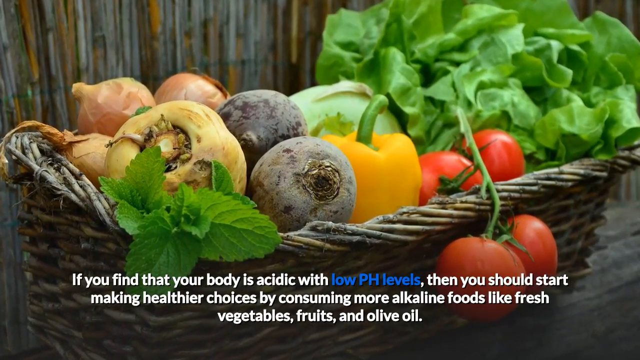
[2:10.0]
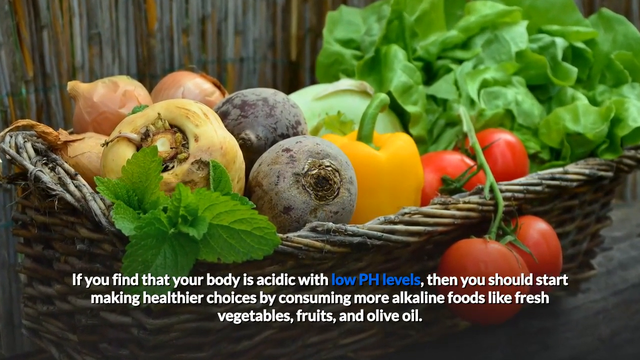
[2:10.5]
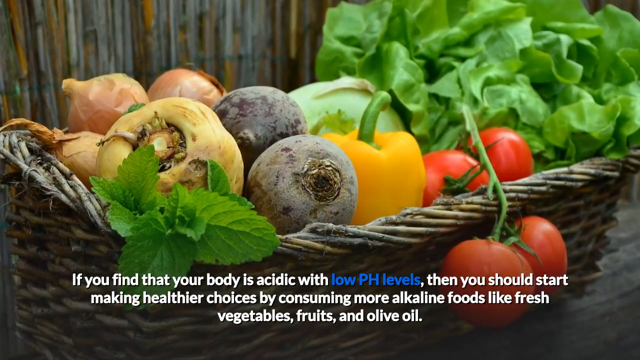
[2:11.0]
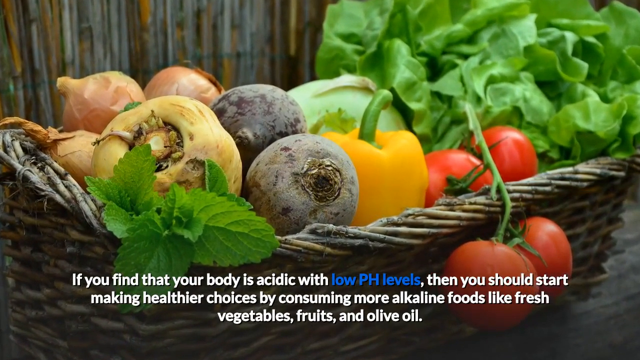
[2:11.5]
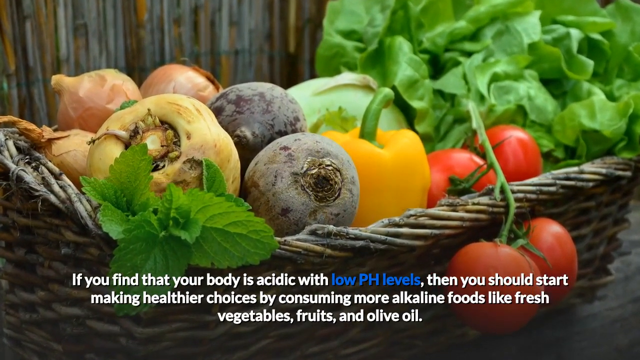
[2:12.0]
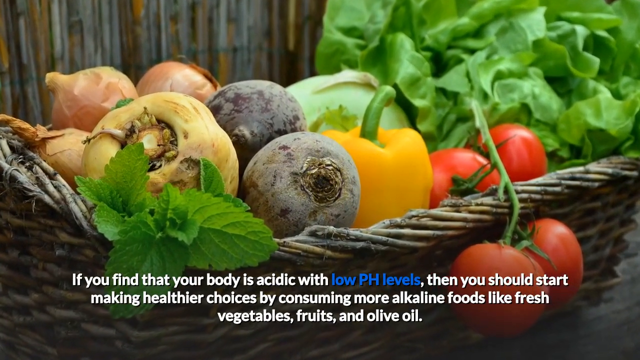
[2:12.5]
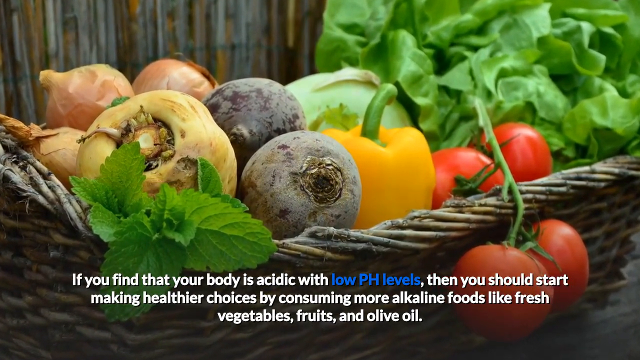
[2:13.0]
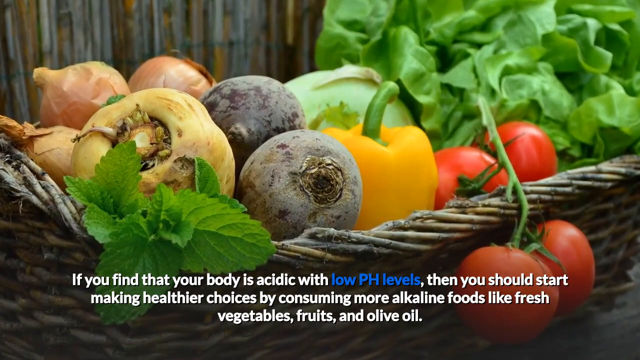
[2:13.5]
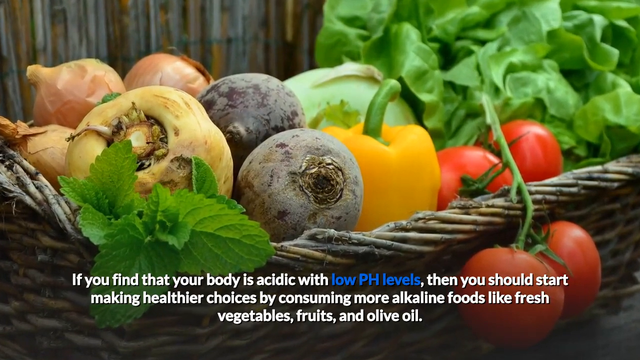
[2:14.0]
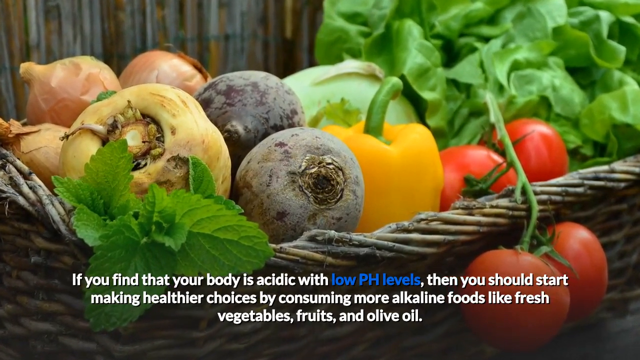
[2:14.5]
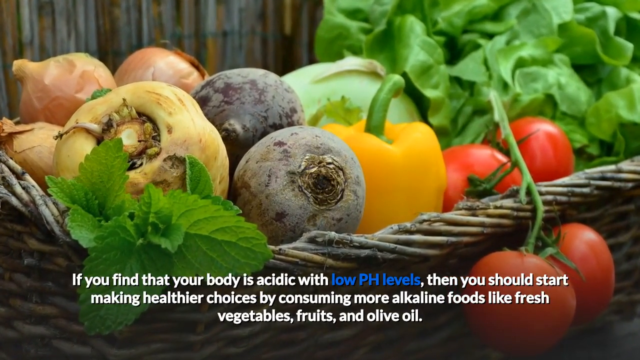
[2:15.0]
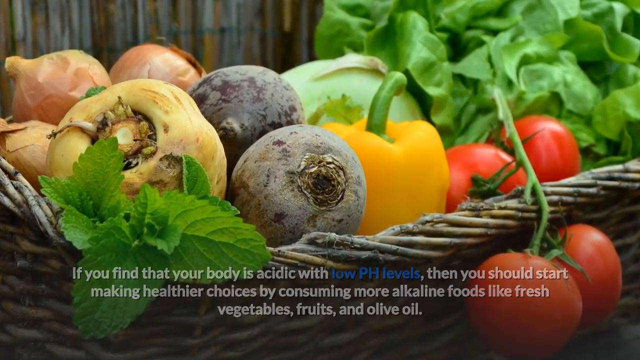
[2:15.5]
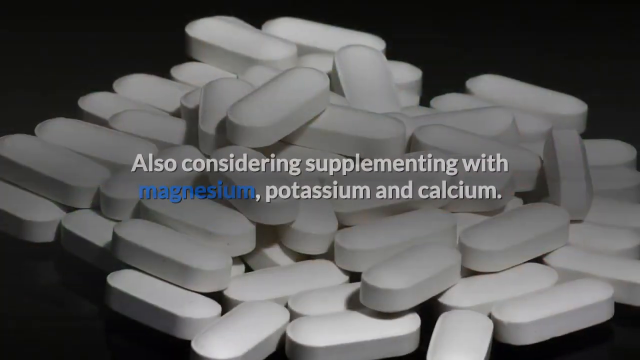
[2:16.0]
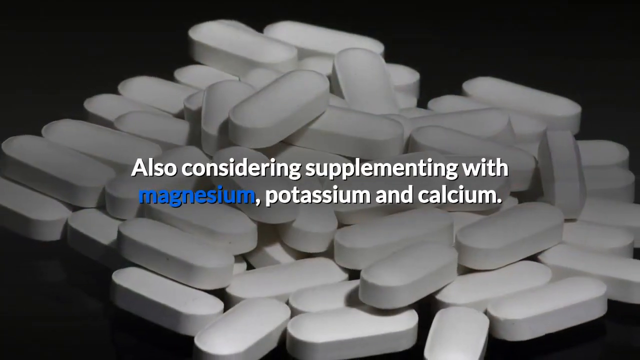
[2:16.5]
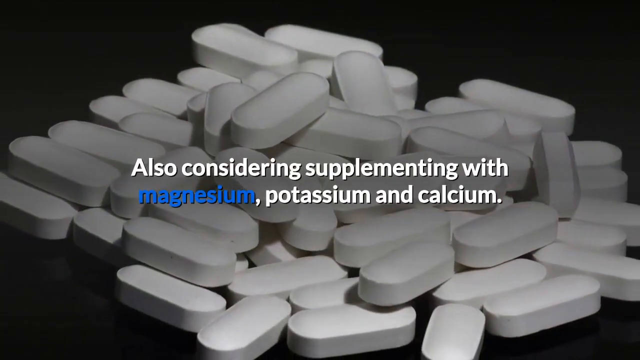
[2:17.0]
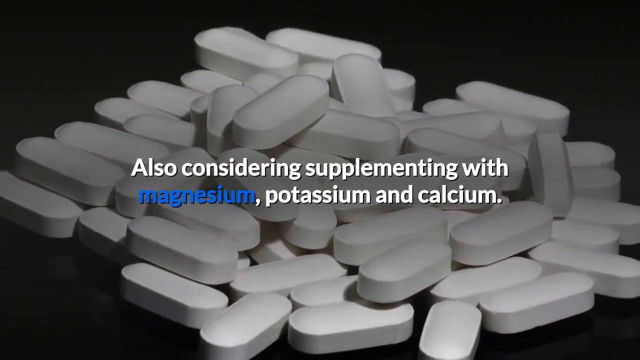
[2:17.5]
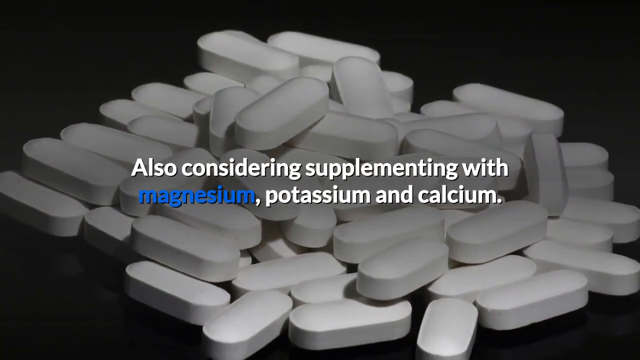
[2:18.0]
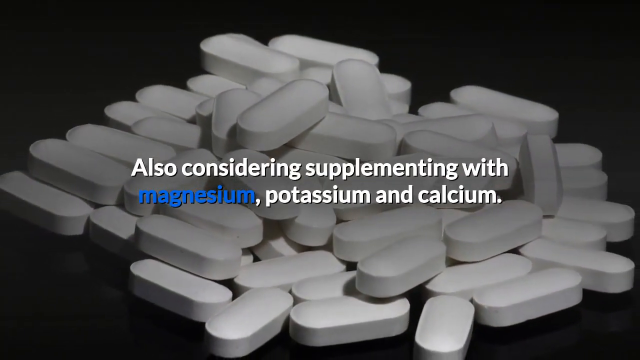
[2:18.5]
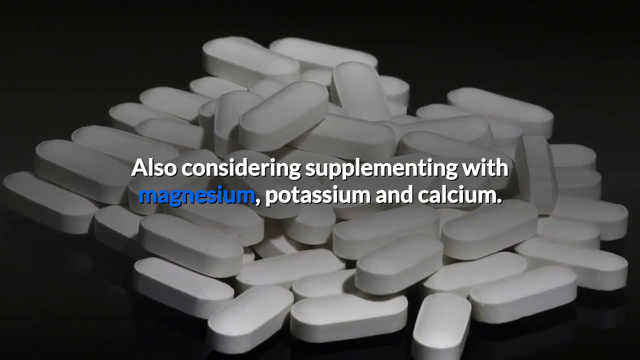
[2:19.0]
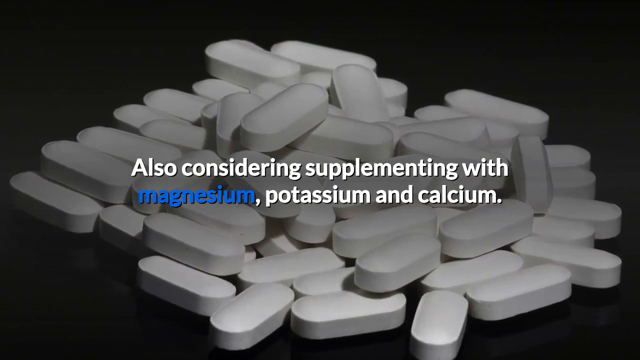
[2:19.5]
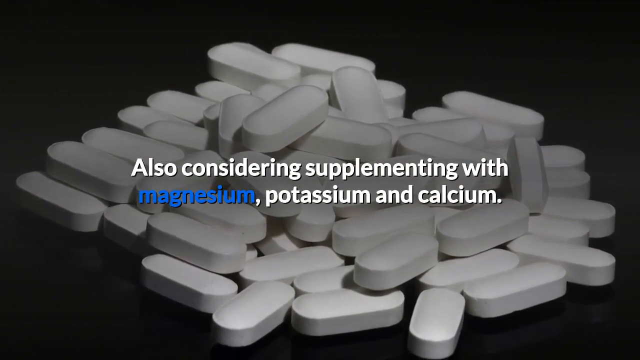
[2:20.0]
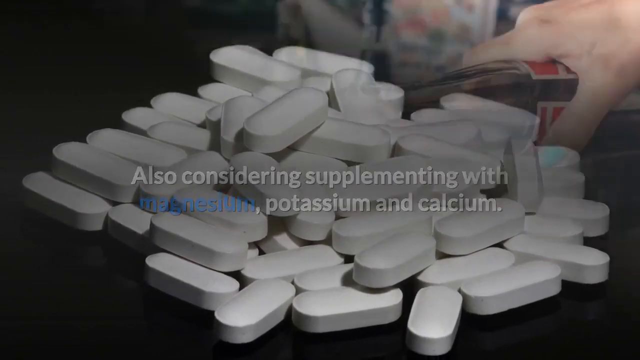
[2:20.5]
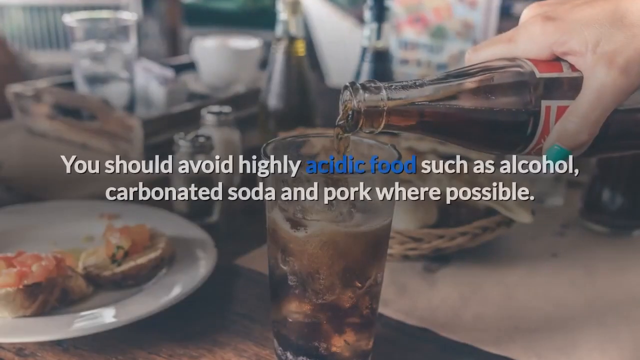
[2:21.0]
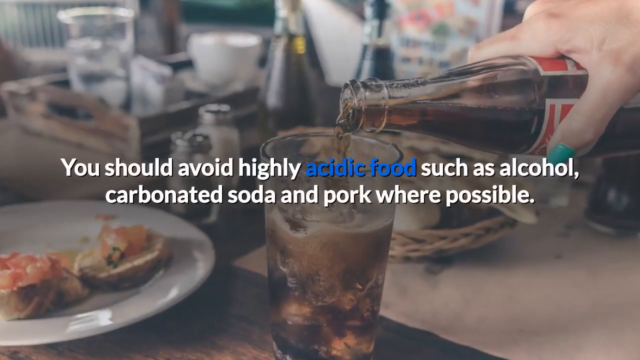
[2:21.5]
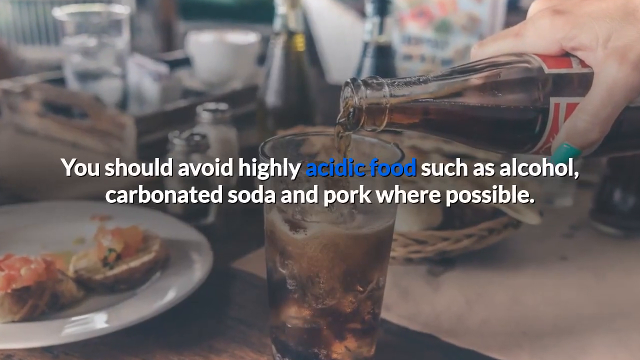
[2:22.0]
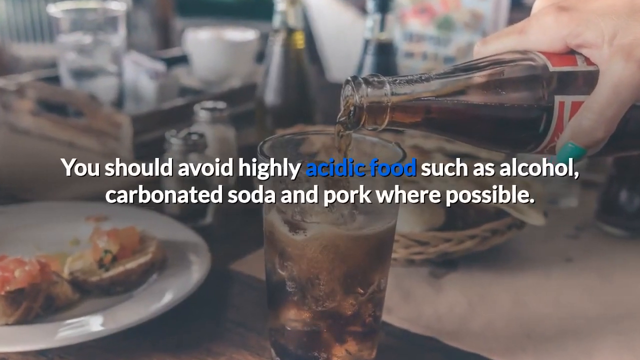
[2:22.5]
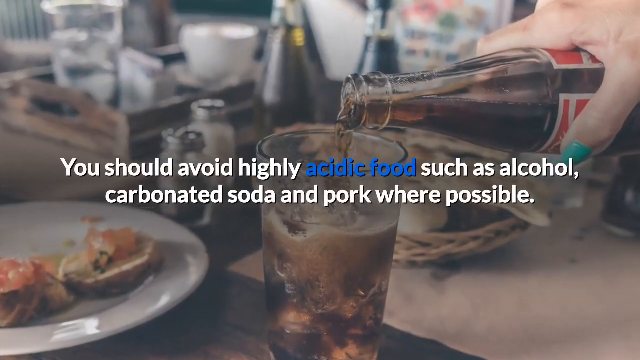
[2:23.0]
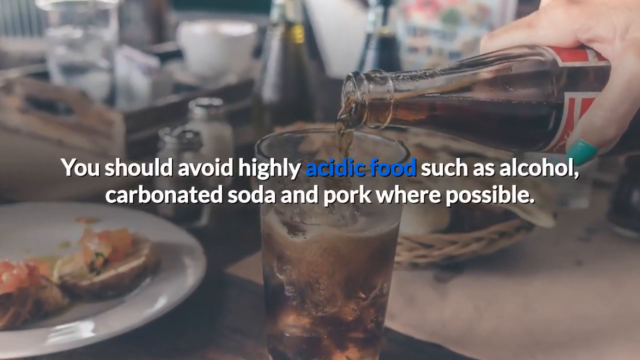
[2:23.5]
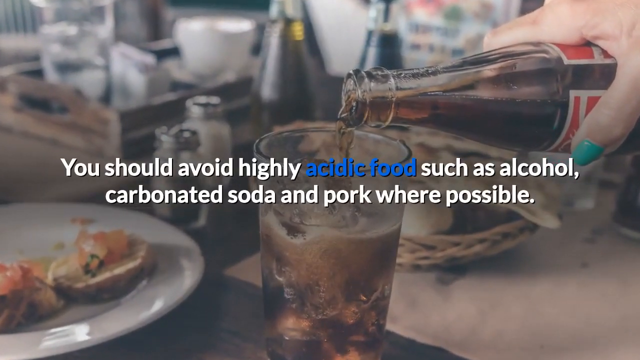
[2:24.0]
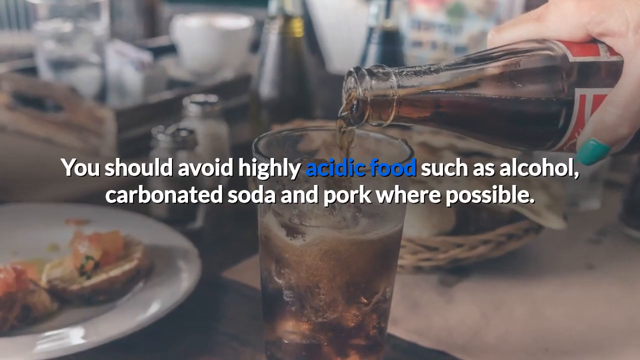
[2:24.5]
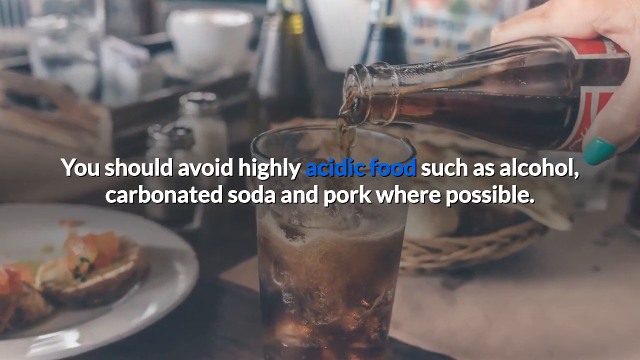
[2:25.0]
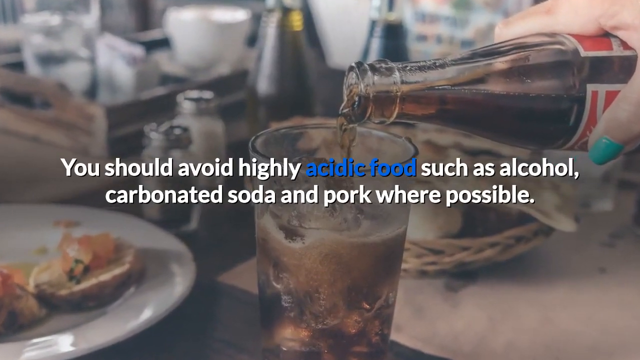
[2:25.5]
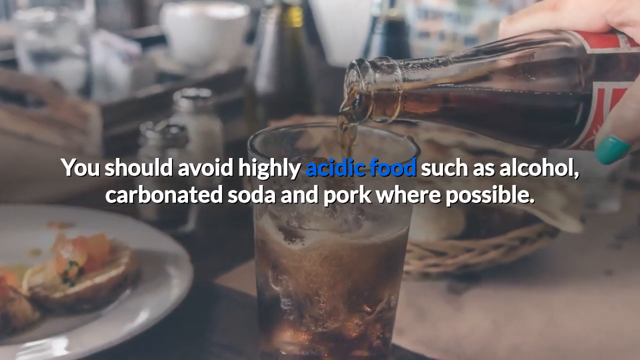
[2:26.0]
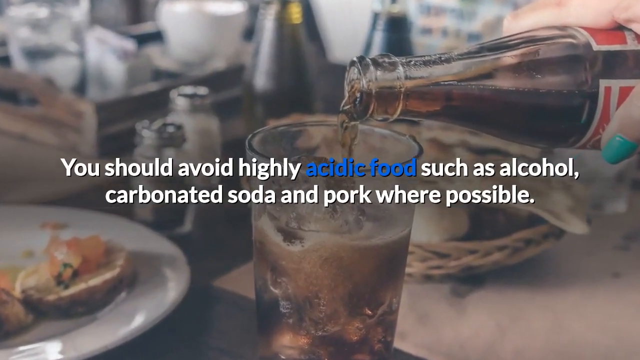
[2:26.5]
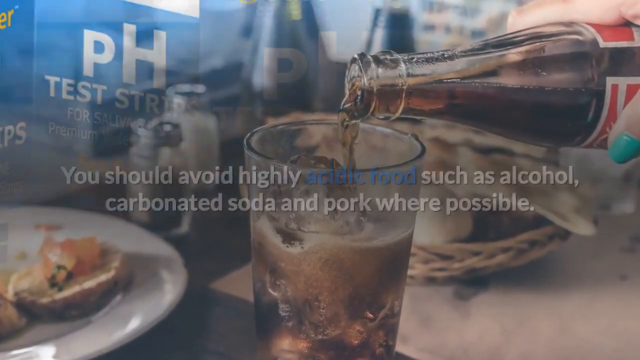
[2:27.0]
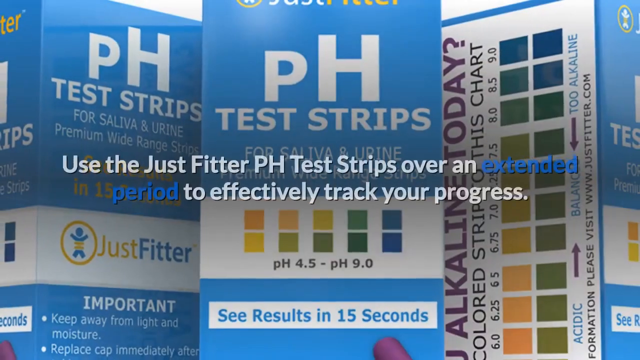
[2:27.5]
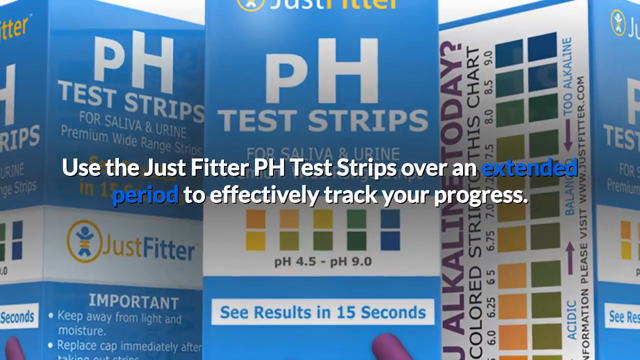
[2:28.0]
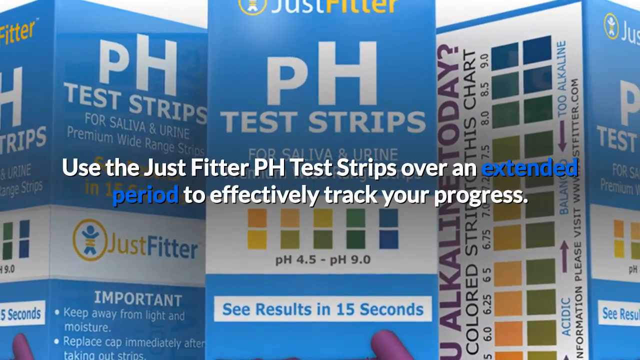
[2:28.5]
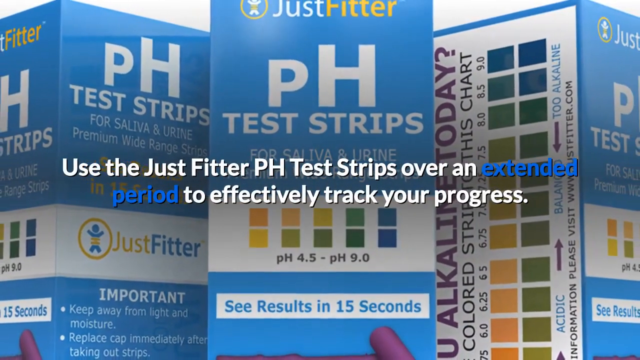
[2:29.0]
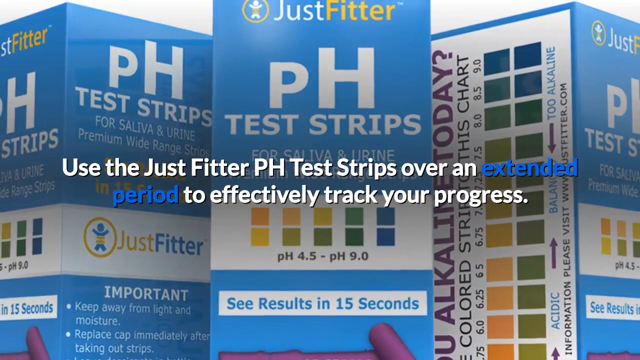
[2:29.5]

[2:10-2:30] A basket full of vegetables appears, including cabbage, tomatoes, bell peppers, beets, and onions. A caption below reads "if you find that your body is acidic with low ph levels then you should start making healthier choices by consuming more alkaline foods like fresh vegetables, fruits, and olive oil." The camera zooms in on the basket of vegetables. The video cuts to an image of white pills jumbled up, with text reading "also considering supplementing with magnesium, potassium, and calcium." It then cuts to a hand pouring a bottle of soda into a cup, with text reading "you should avoid highly acidic foods such as alcohol, carbonated soda, and pork where possible." Next comes an image of boxes of the pH test strips with text reading "use the JustFitter pH test strips over an extended period to effectively track your progress."